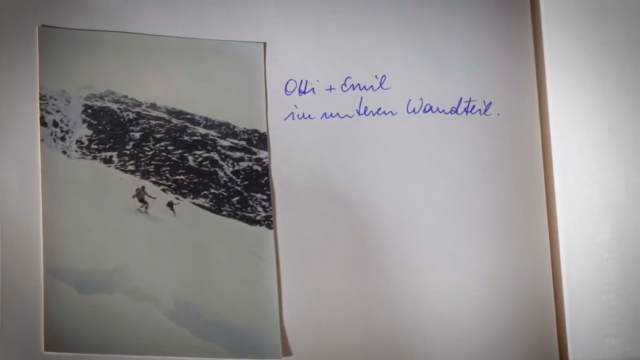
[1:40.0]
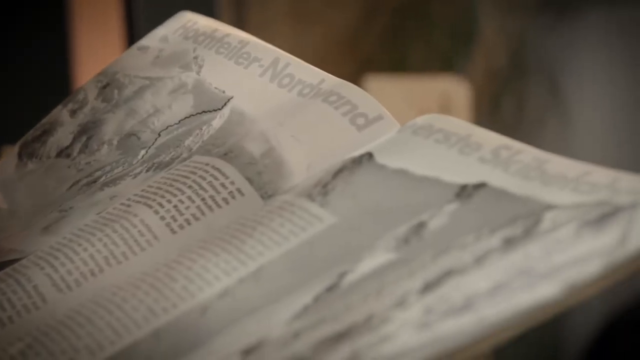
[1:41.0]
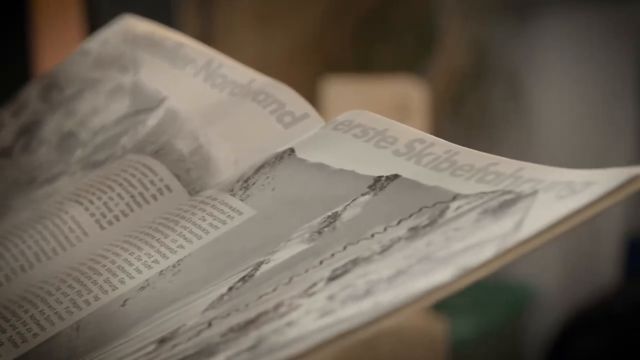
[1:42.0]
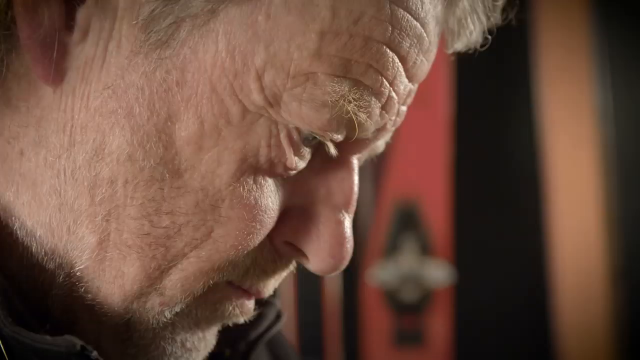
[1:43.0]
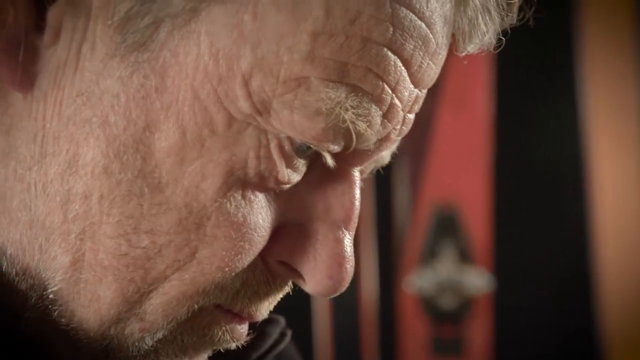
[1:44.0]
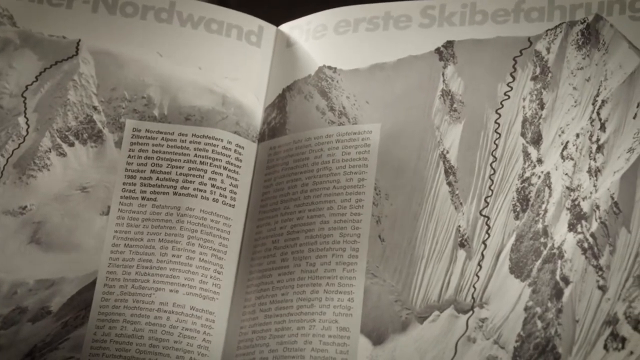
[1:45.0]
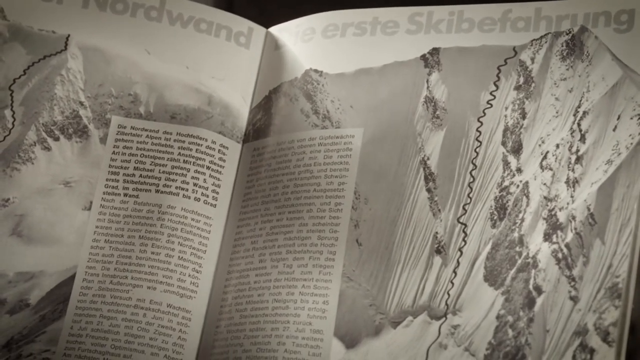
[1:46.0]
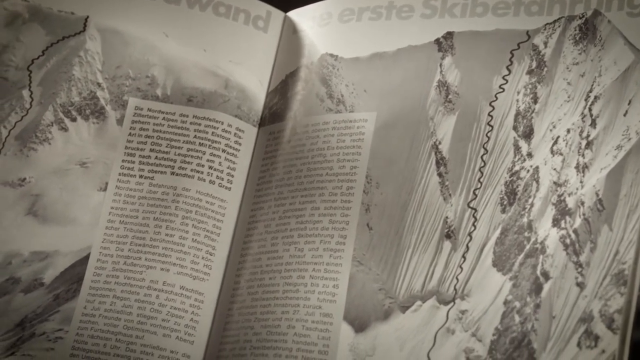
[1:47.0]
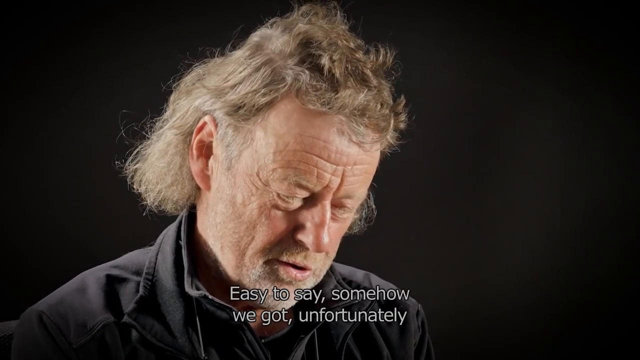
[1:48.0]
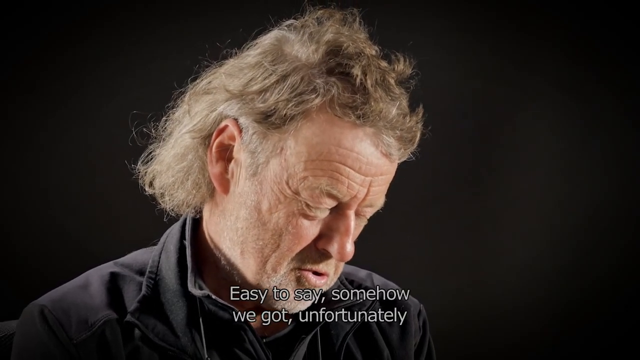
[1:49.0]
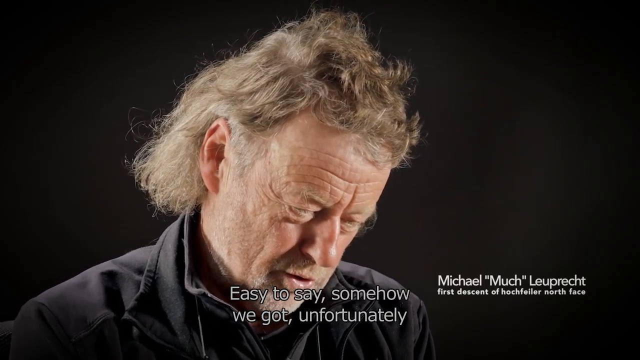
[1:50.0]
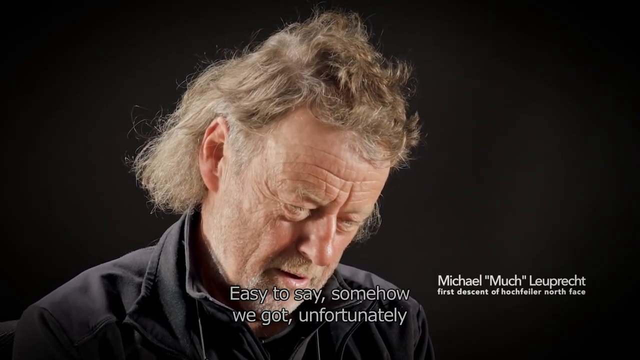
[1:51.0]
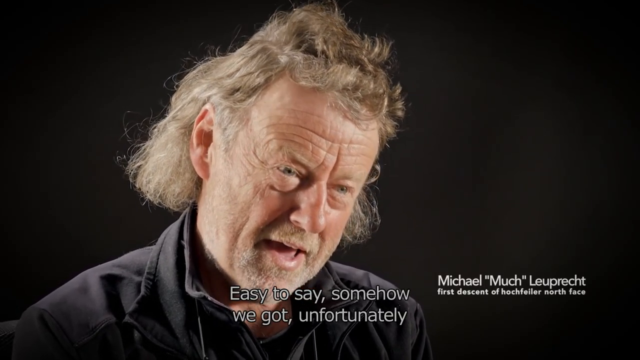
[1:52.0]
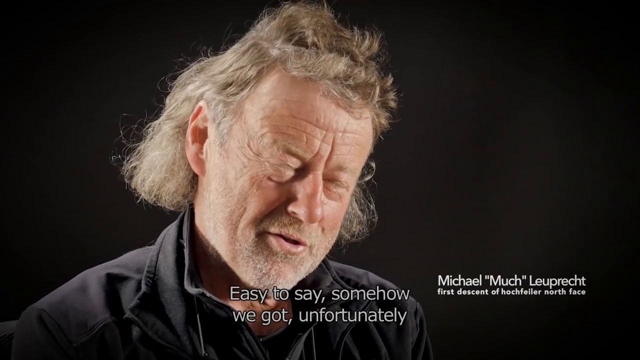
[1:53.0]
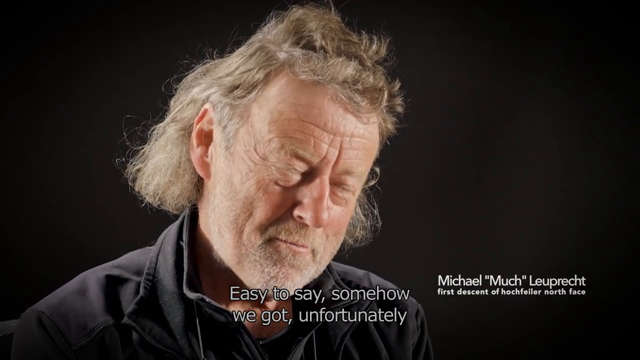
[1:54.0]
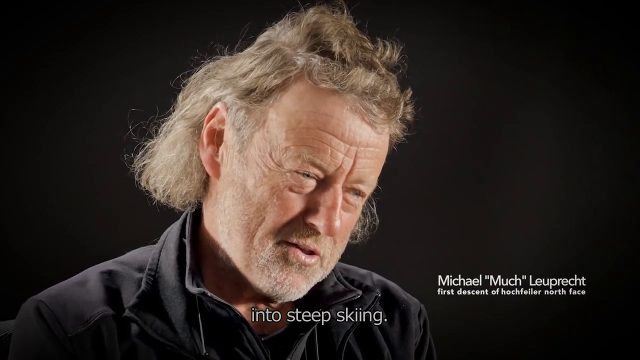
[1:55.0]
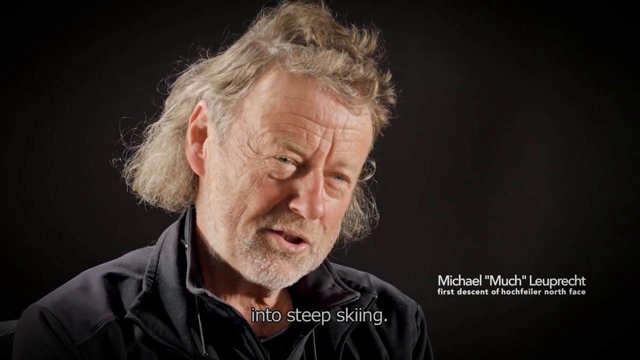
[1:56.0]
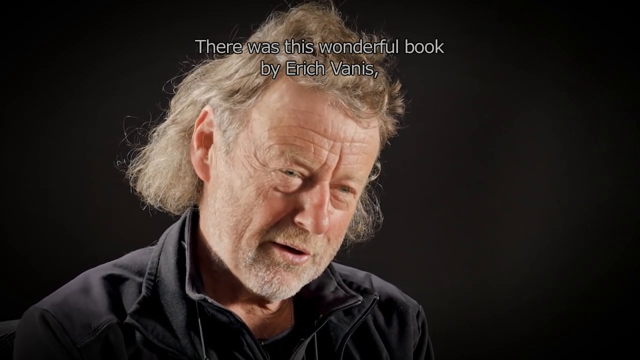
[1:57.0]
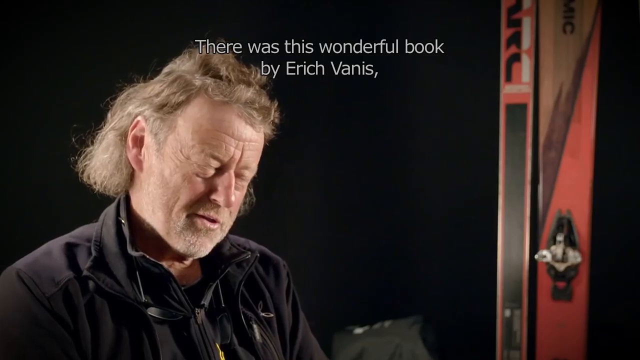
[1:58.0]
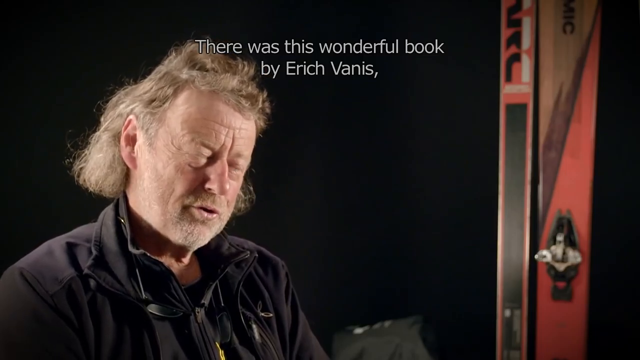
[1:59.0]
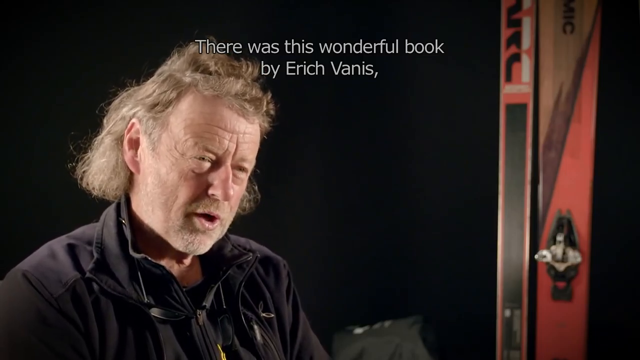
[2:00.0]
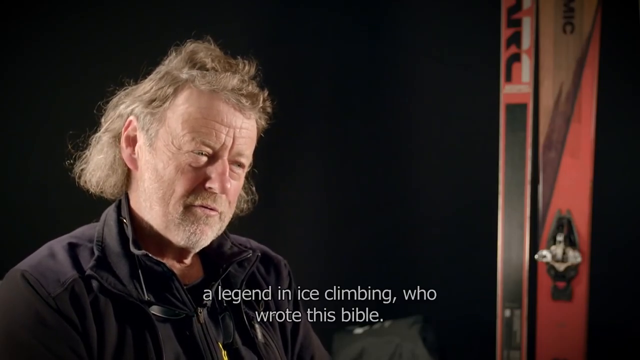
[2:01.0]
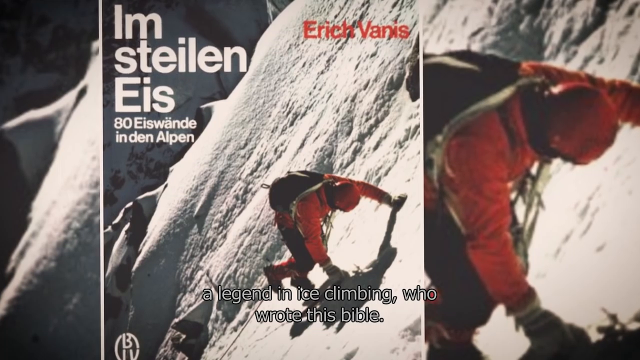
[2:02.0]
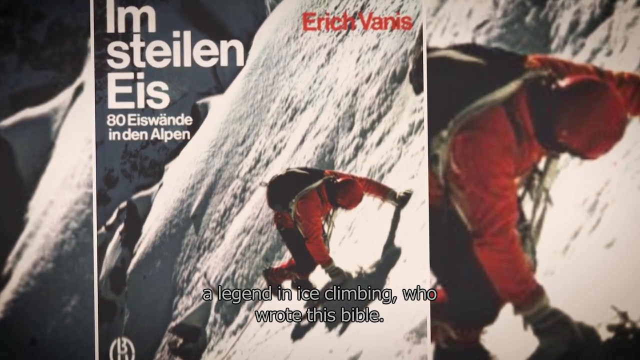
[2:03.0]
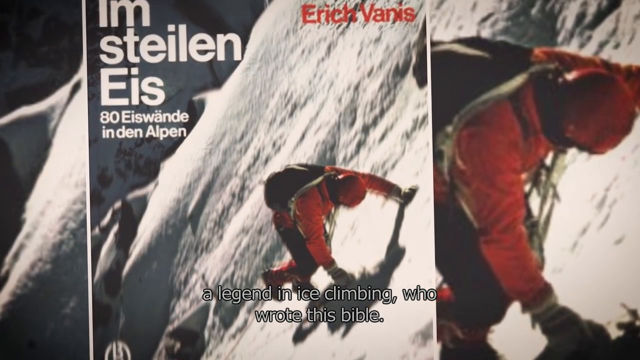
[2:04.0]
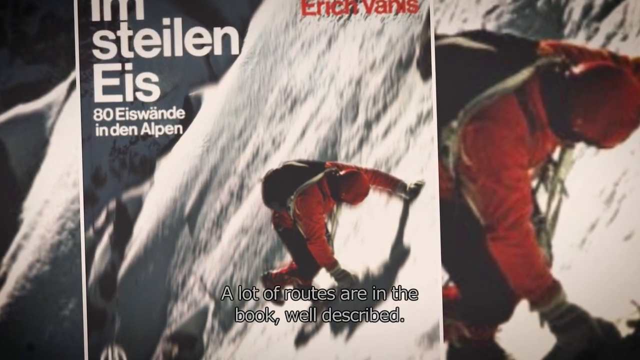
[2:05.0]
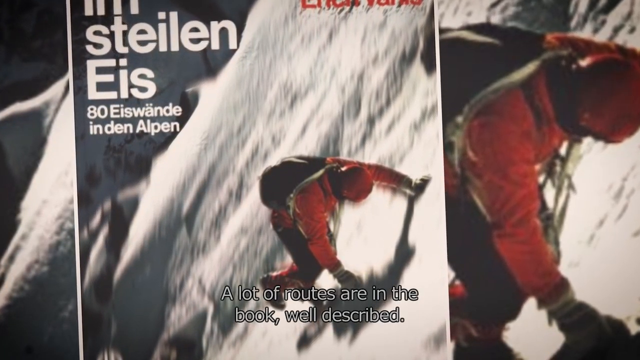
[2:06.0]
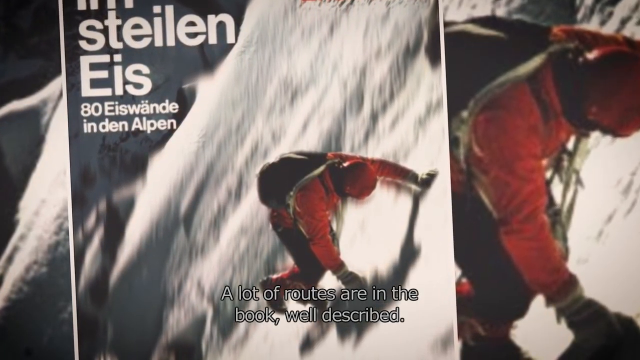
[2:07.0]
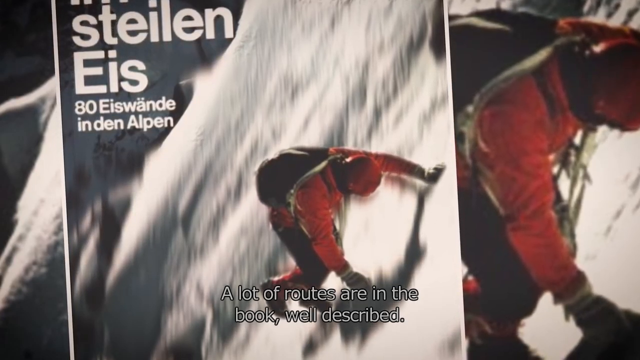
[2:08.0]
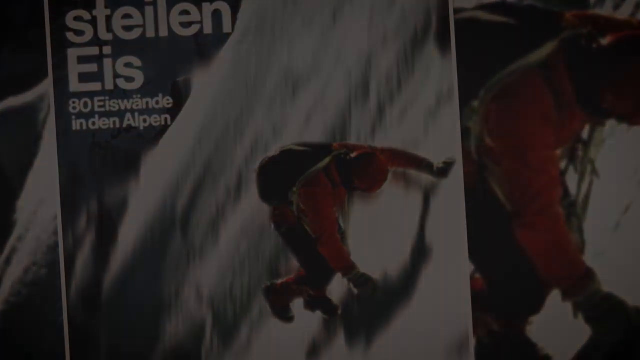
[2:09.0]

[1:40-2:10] A black and white magazine shows a mountain range, with text written in a foreign language. The magazine is being read by a white man with blonde hair, an old man in his seventies. He is speaking, and a caption with his words includes "steep skiing." The man's name is Michael "Murch". Another caption refers to a wonderful book by a legend and says "A lot of routes in the book were described."